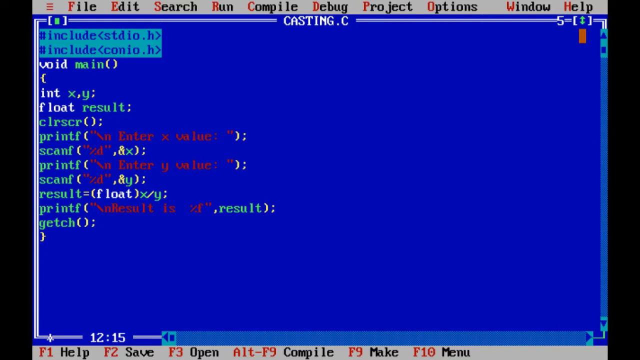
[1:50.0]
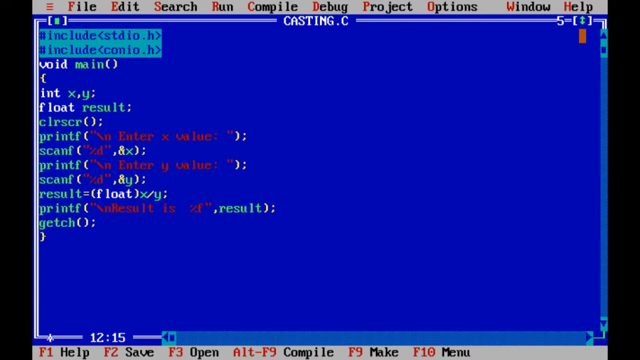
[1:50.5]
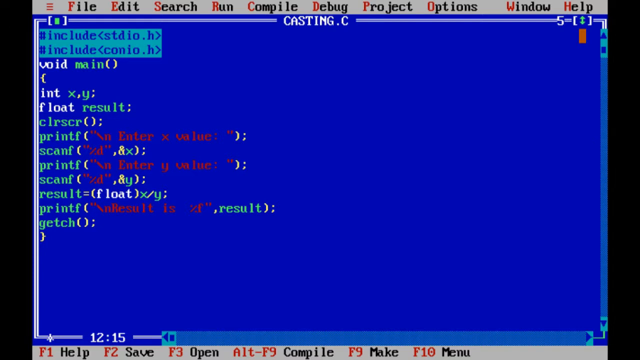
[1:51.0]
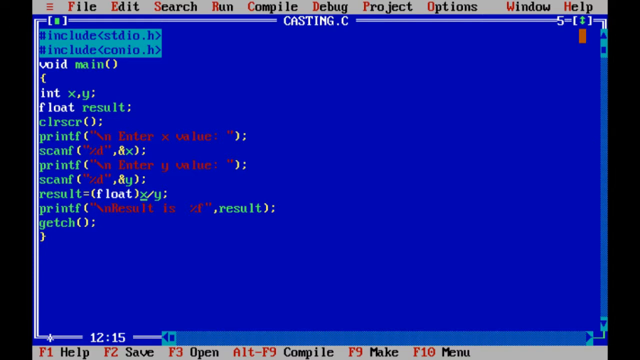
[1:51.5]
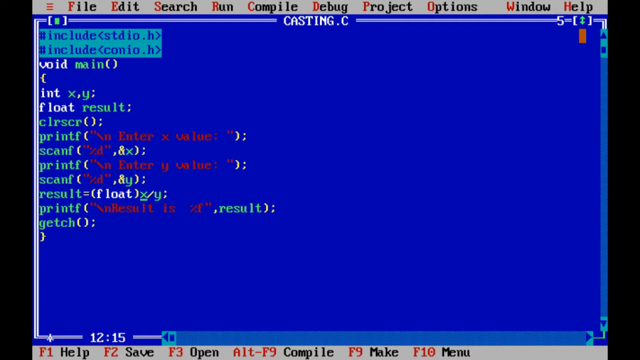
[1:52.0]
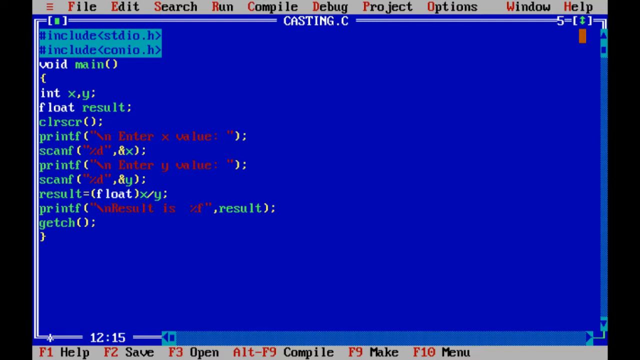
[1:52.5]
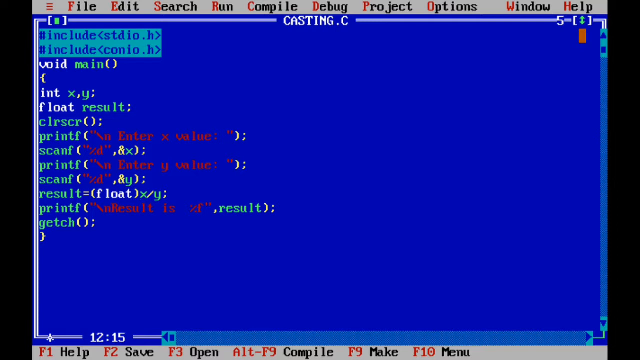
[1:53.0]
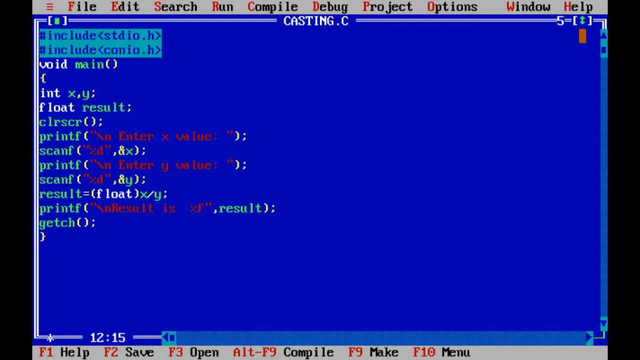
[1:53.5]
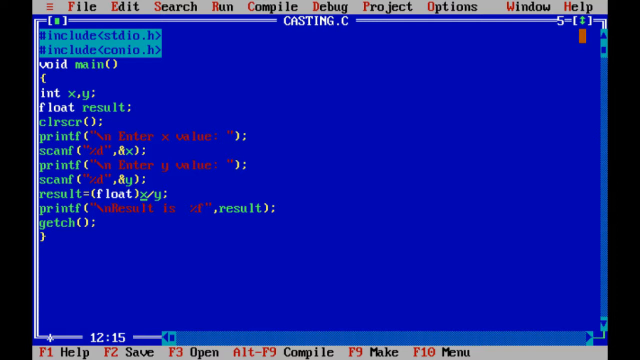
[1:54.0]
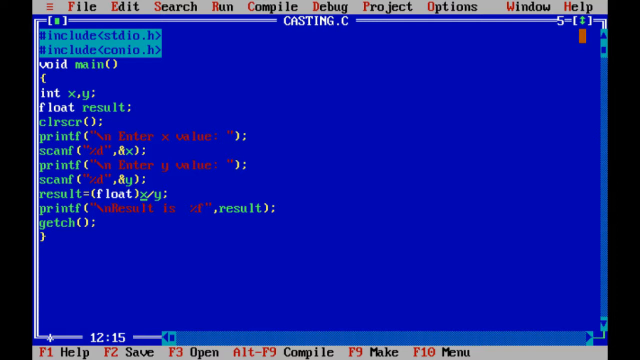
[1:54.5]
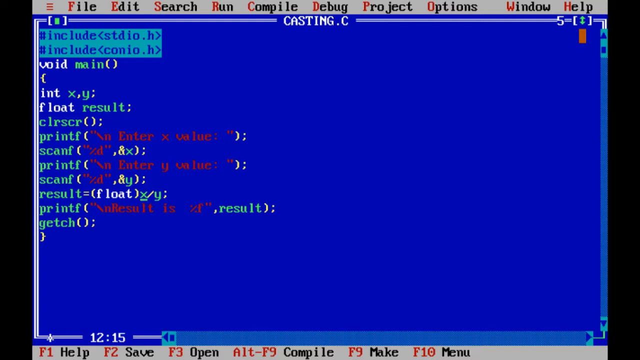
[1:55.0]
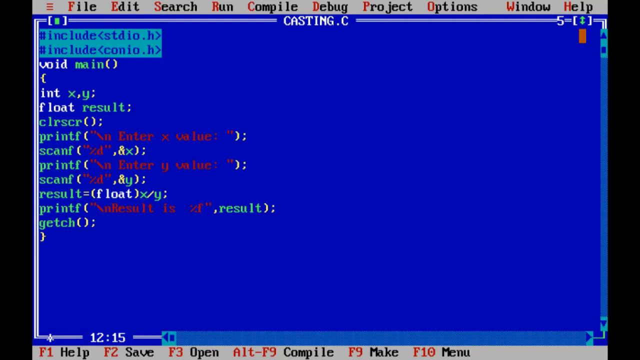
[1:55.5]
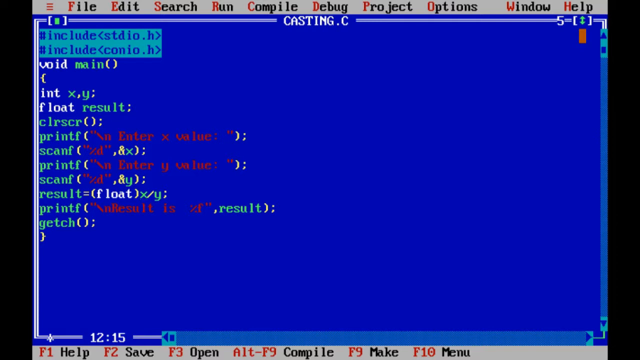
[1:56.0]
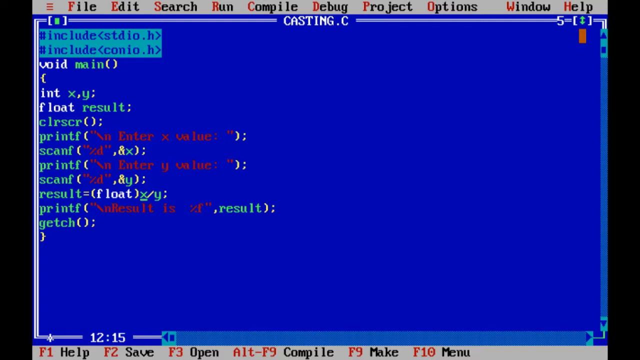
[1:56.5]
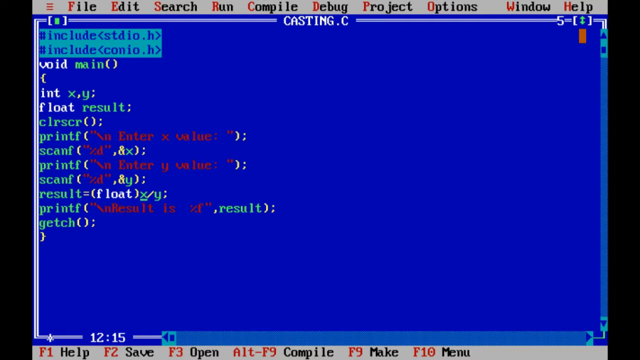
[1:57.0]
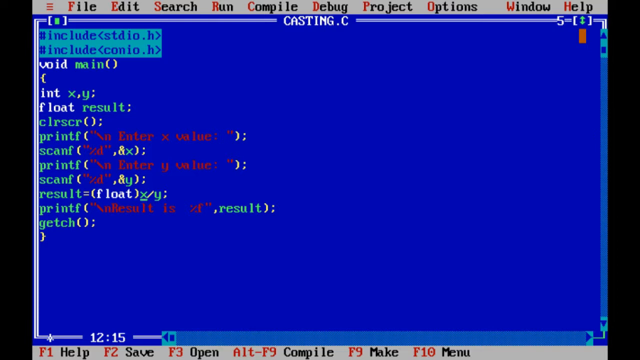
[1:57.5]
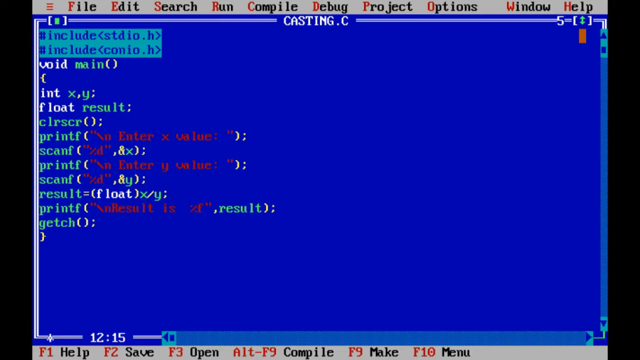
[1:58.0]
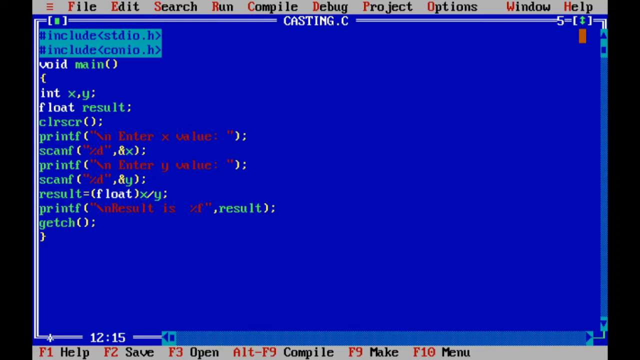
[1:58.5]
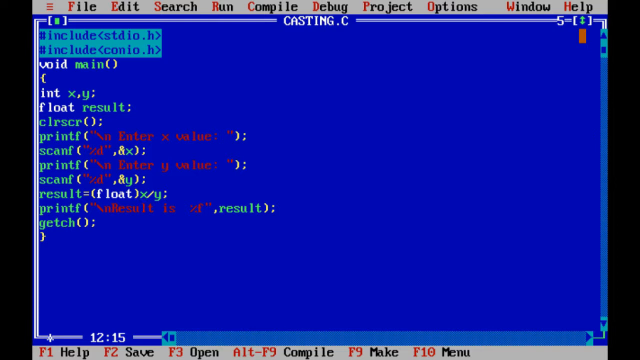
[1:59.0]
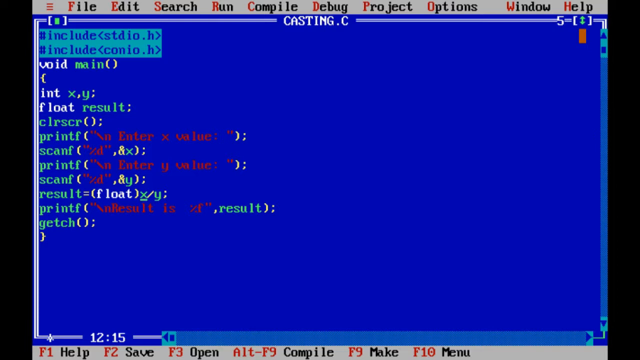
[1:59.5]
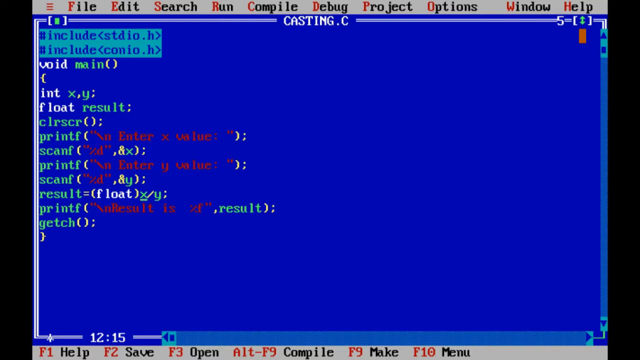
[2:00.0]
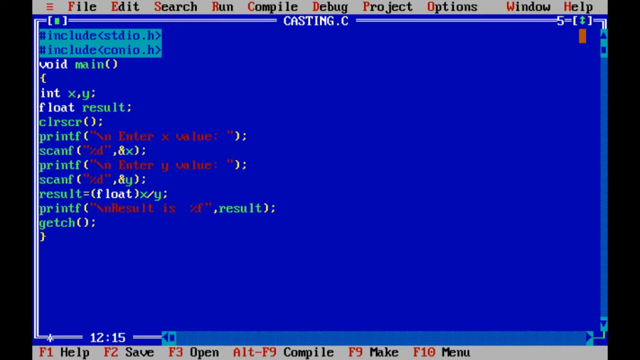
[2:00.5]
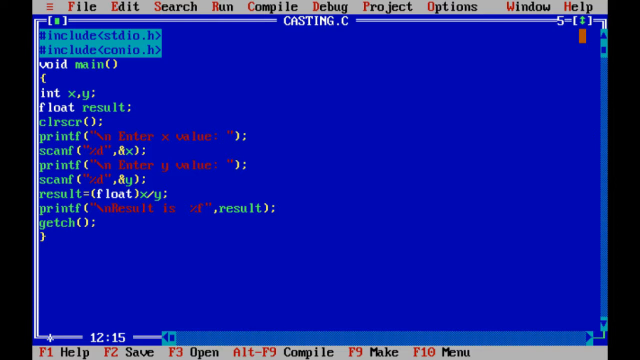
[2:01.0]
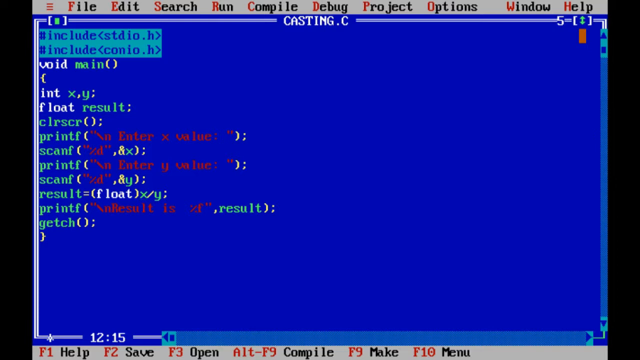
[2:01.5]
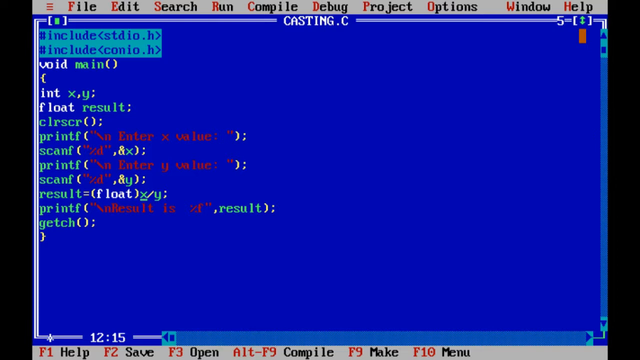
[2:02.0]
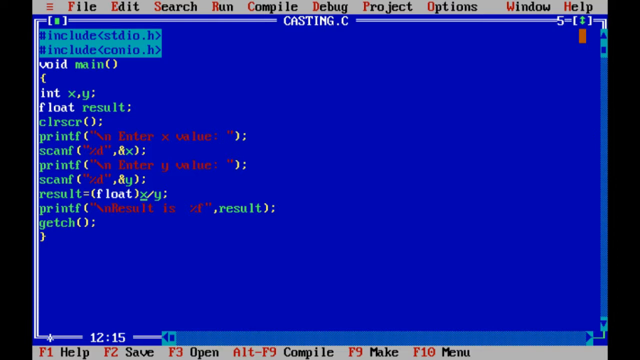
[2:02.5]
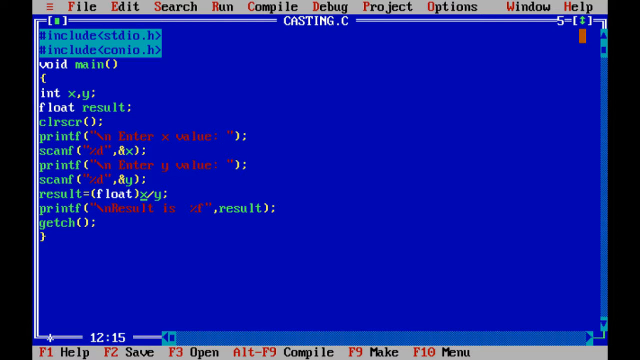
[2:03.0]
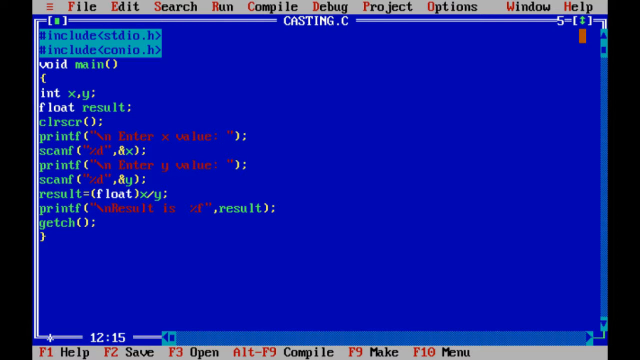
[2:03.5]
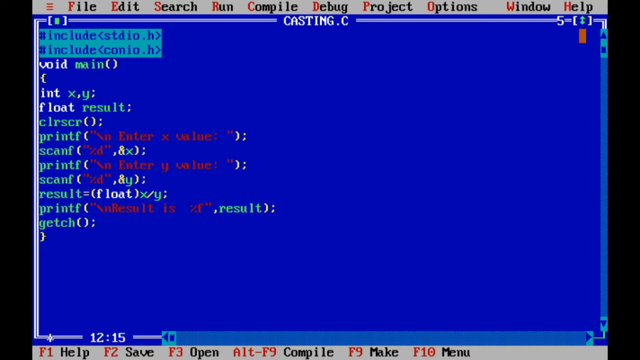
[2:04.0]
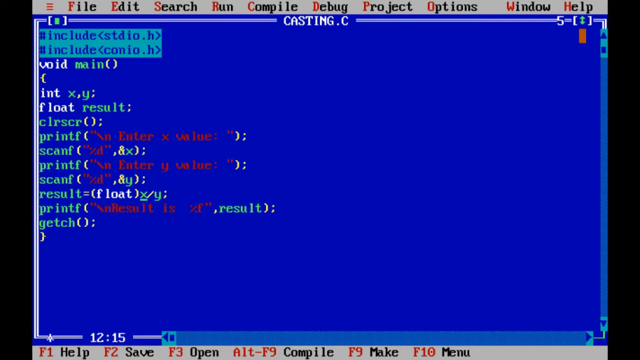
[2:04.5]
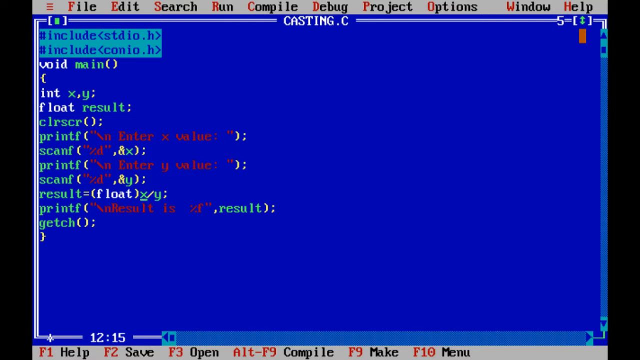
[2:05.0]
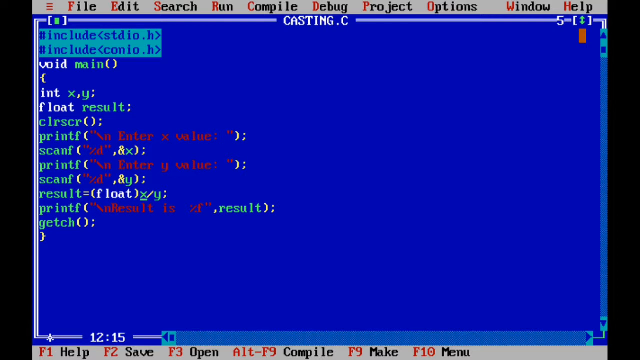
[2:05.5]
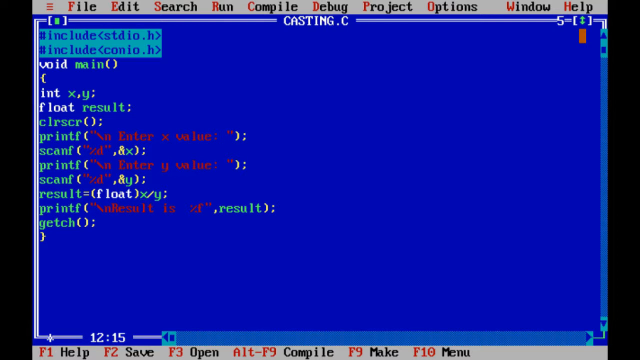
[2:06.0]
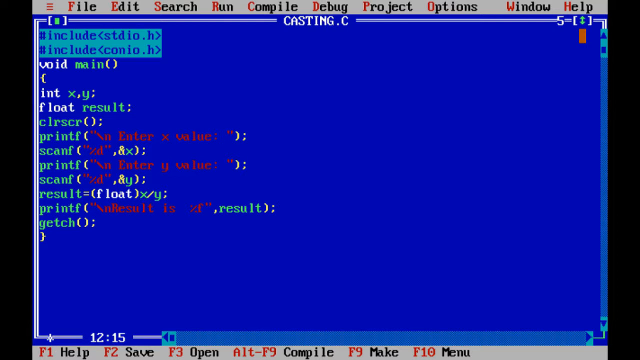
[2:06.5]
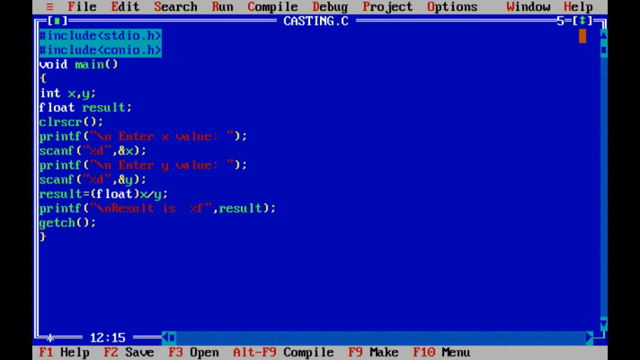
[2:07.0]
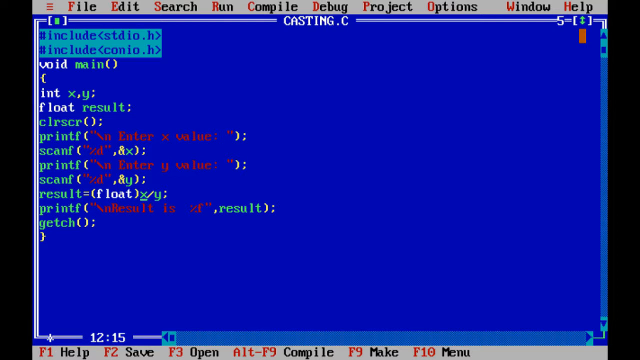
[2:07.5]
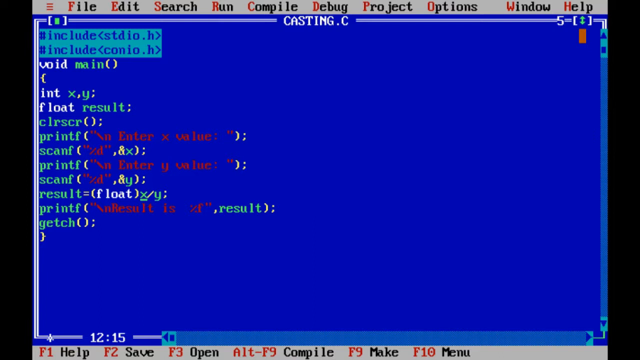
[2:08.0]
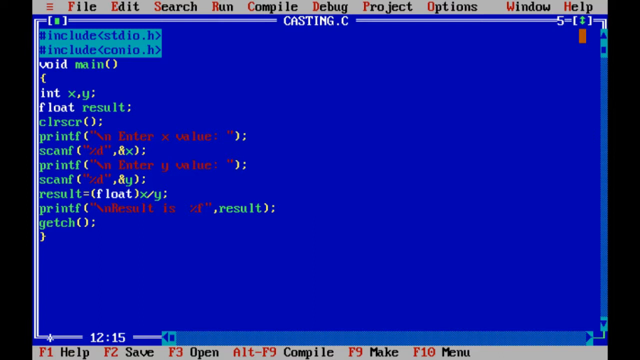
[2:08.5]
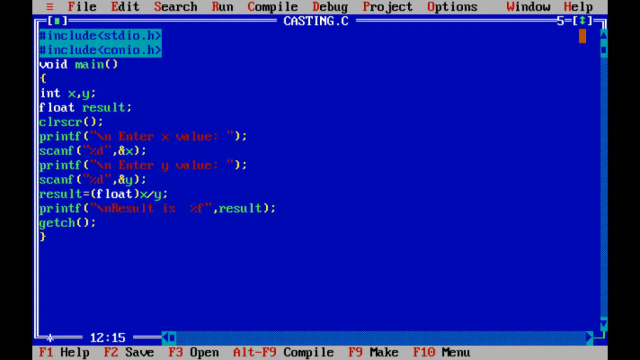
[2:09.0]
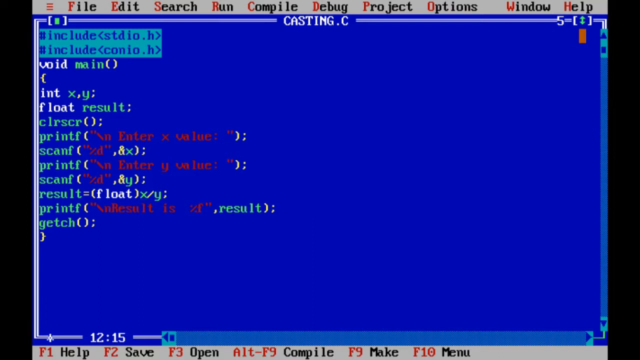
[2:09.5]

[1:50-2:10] A static IDE screen with a blue background, in a simple style with just a few lines of code, shows a void main function. The function has two integer variables, x and y, and a float called result, and uses the integers in a calculation to produce a result. The only movement is an underline cursor flickering under the variable x on line 10, where the code reads "result=(float)x/y;". At the top are two lines reading "#include<stdio.h>" and "#include <conio.h>". The IDE window has header and footer menu control options with a grey background and black and red text, plus vertical and horizontal scroll bars.